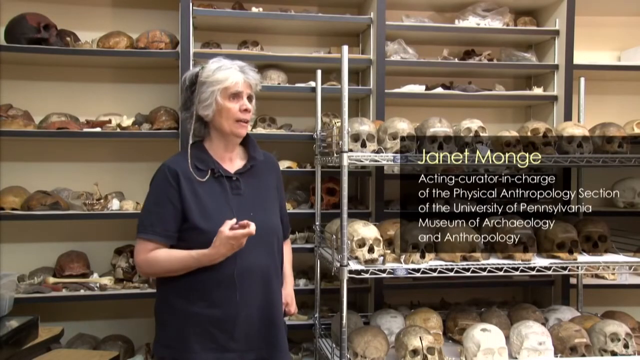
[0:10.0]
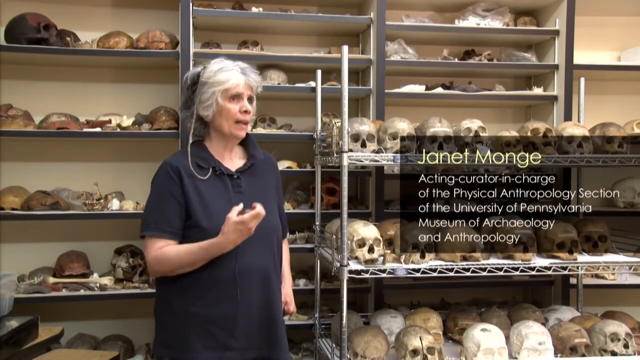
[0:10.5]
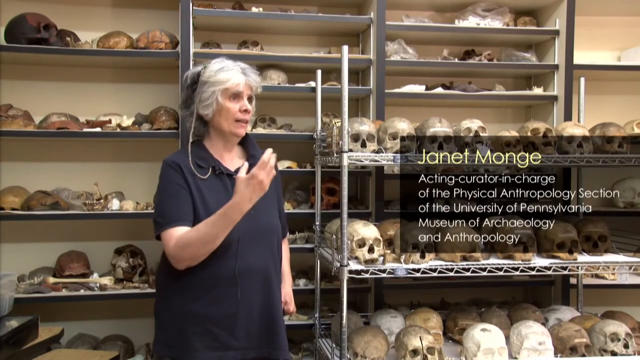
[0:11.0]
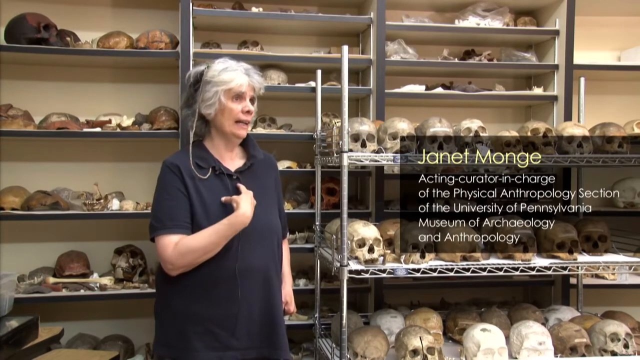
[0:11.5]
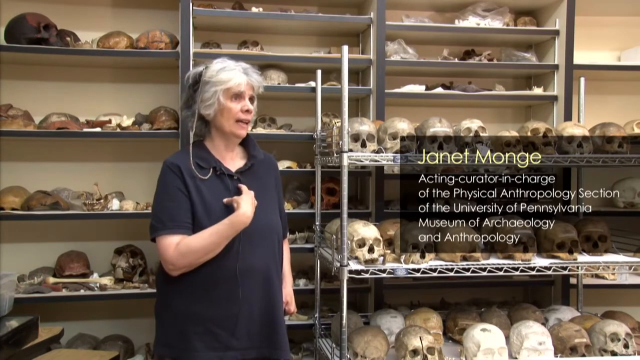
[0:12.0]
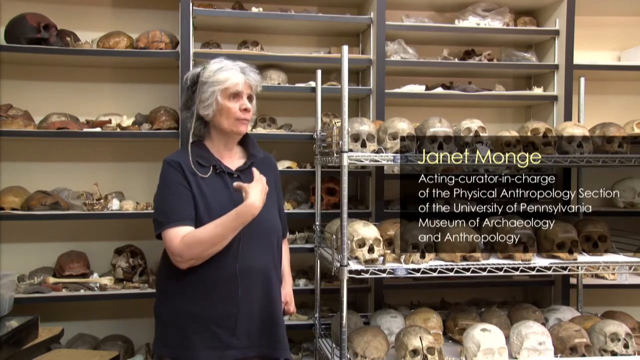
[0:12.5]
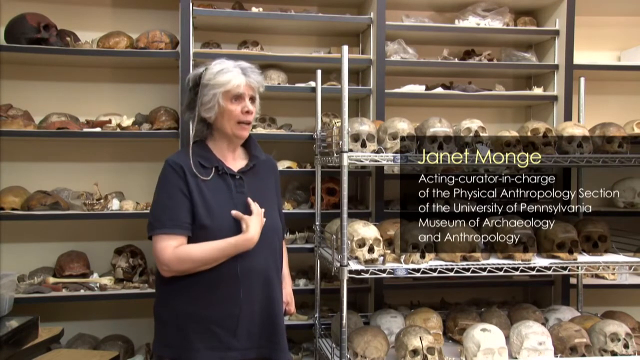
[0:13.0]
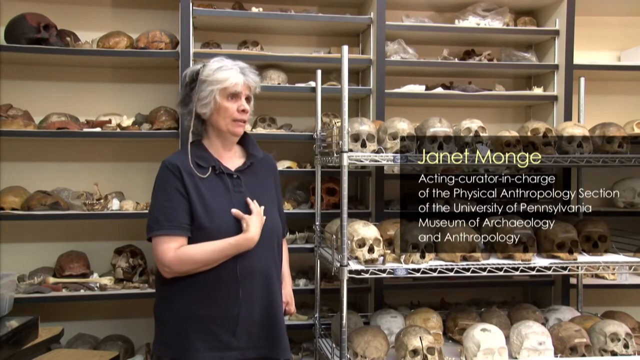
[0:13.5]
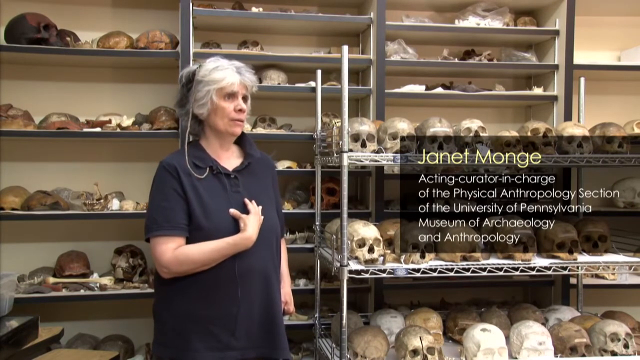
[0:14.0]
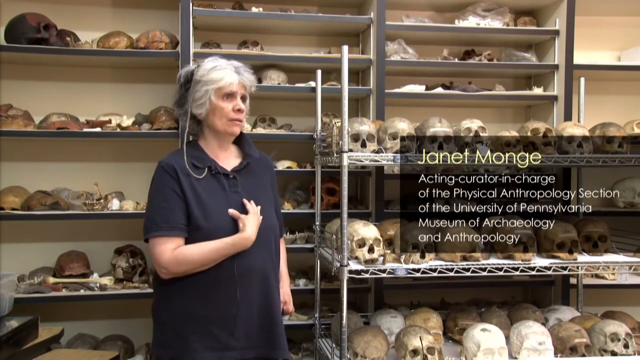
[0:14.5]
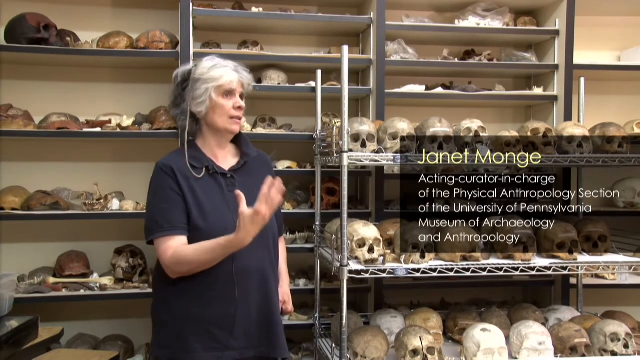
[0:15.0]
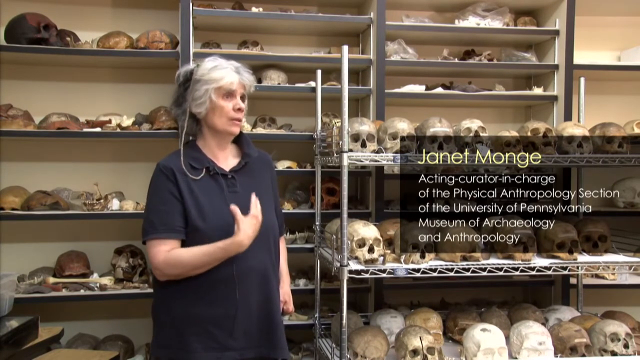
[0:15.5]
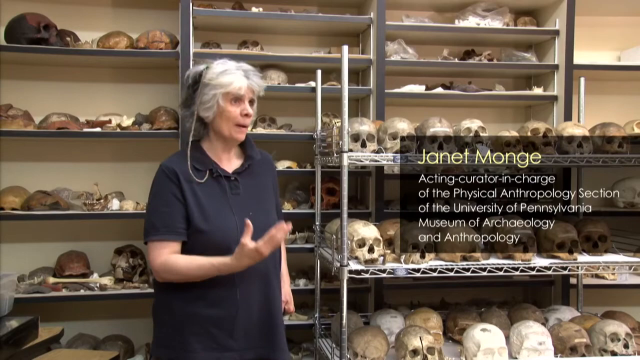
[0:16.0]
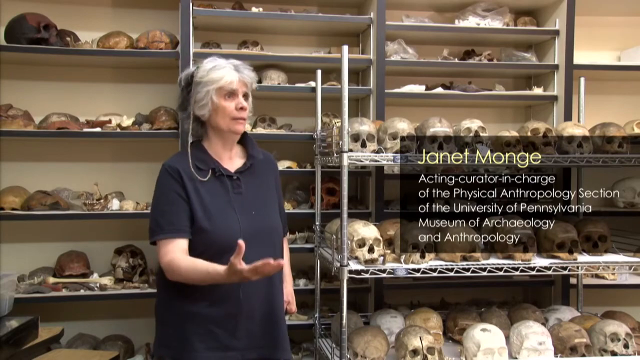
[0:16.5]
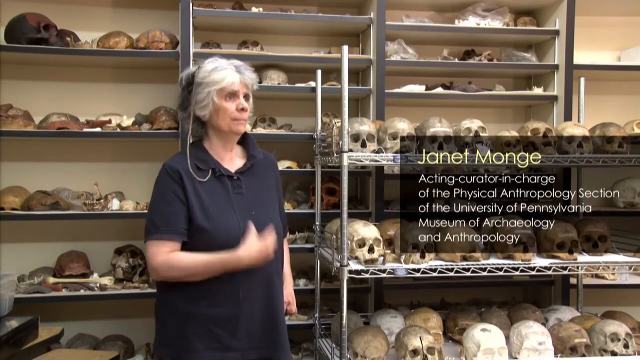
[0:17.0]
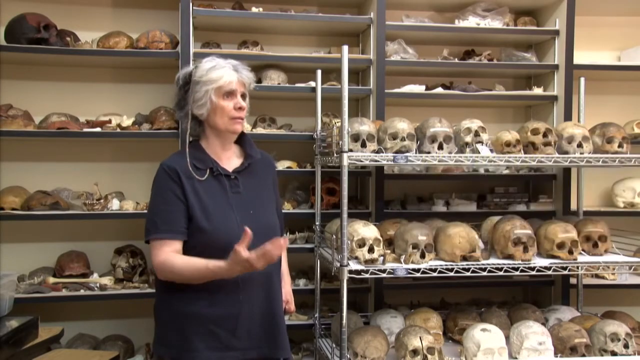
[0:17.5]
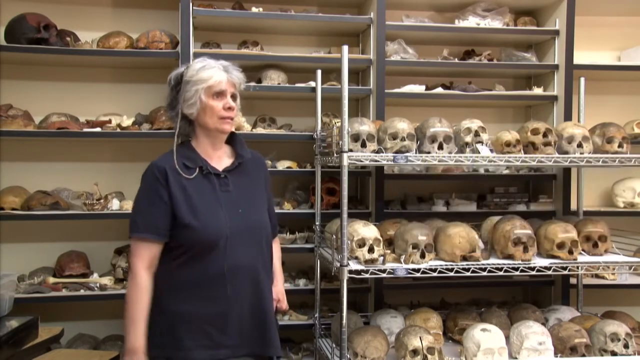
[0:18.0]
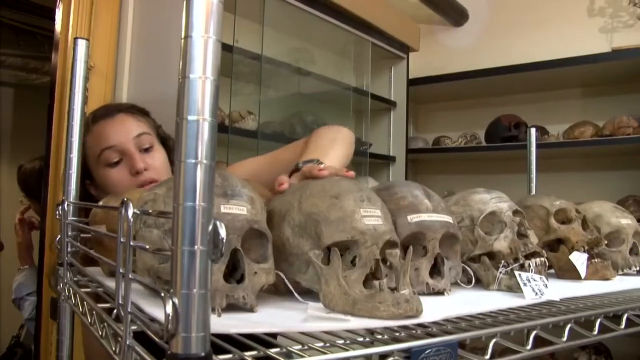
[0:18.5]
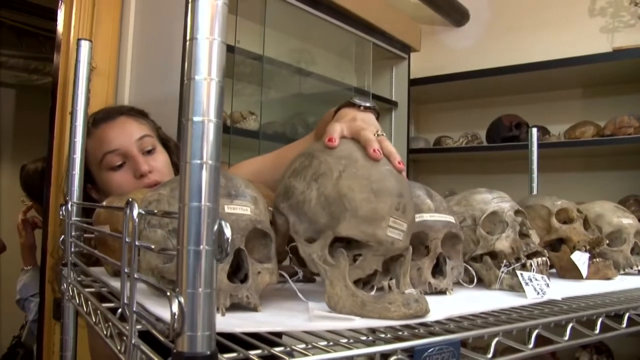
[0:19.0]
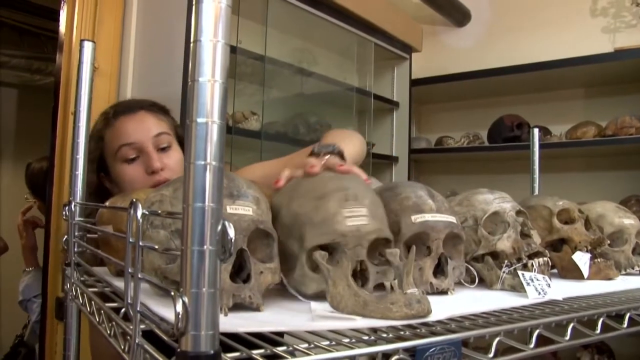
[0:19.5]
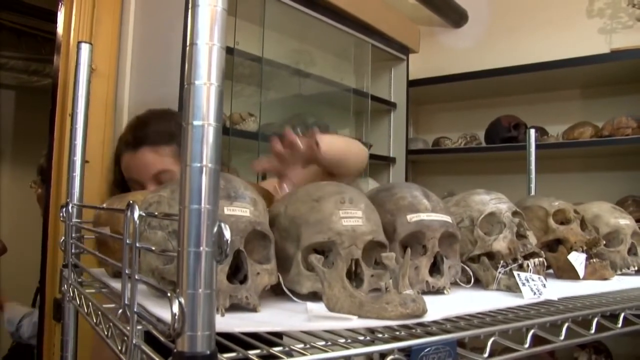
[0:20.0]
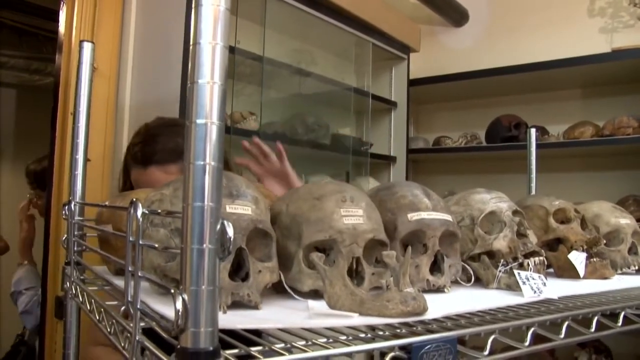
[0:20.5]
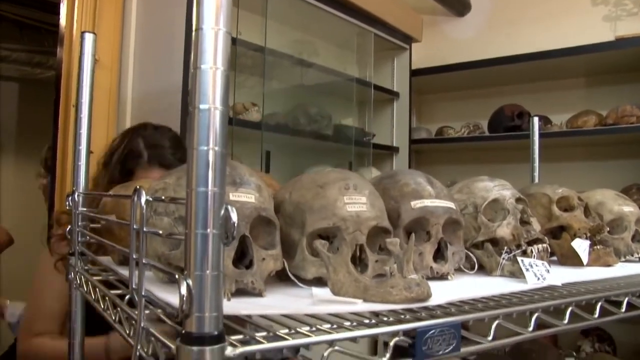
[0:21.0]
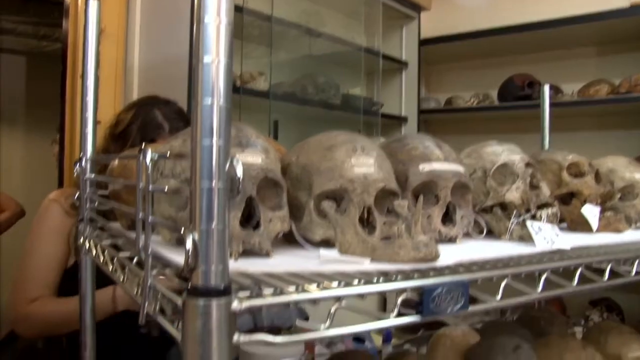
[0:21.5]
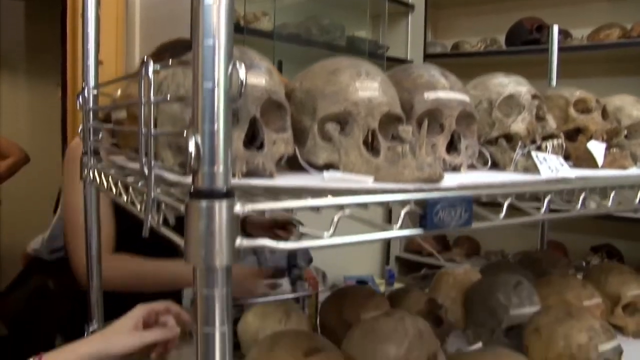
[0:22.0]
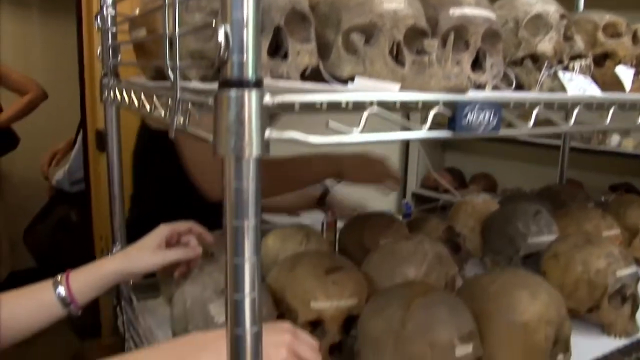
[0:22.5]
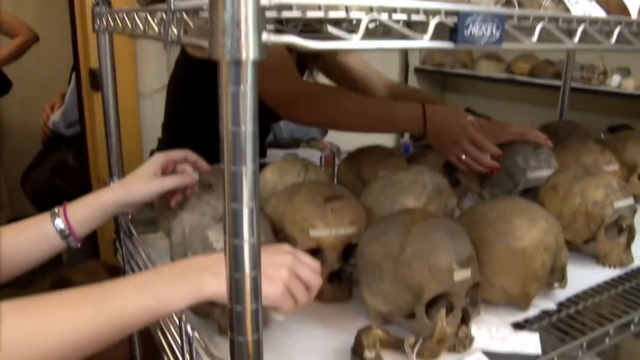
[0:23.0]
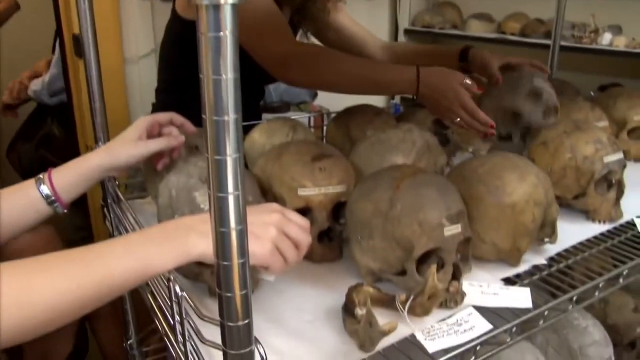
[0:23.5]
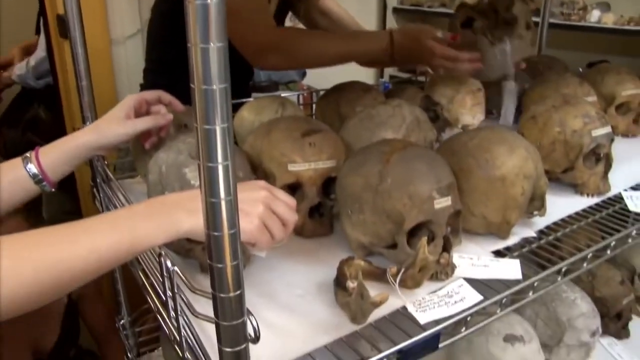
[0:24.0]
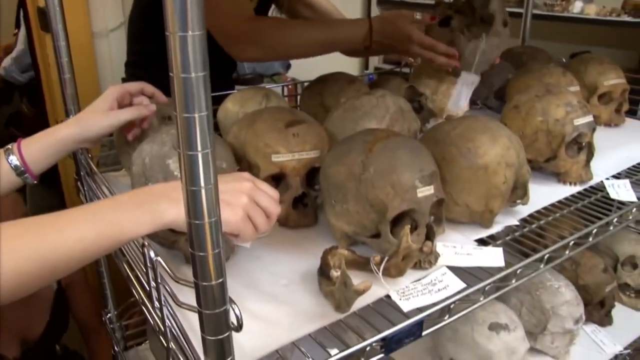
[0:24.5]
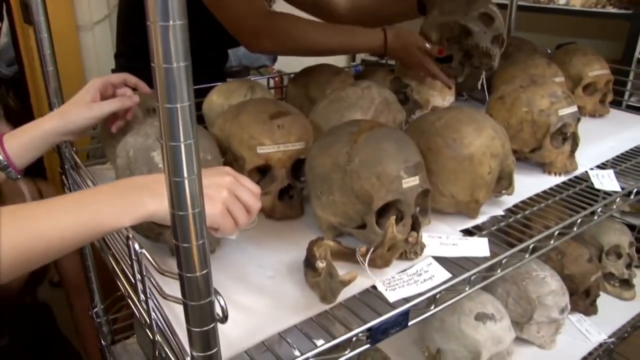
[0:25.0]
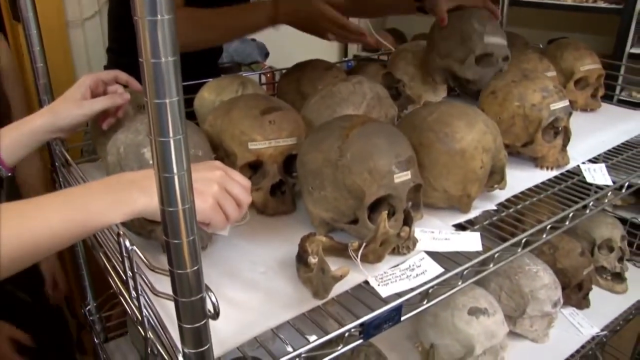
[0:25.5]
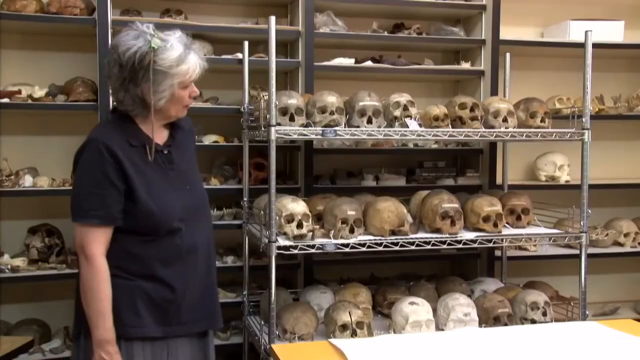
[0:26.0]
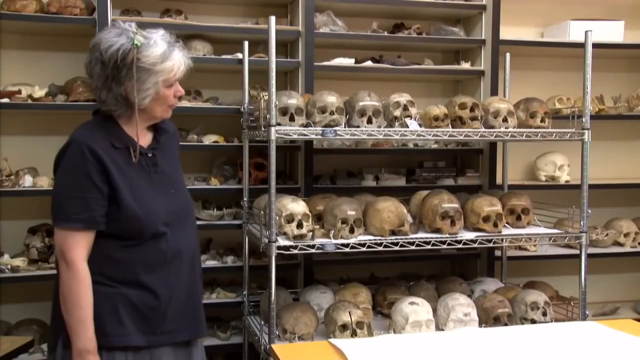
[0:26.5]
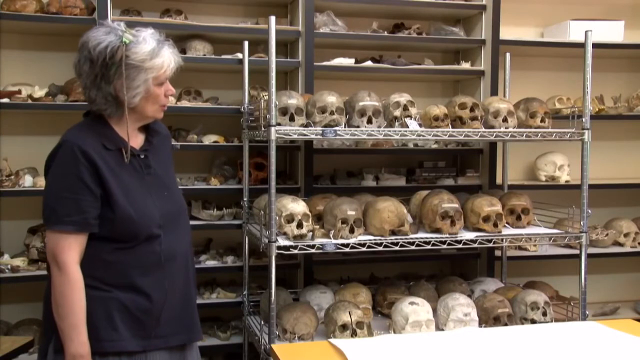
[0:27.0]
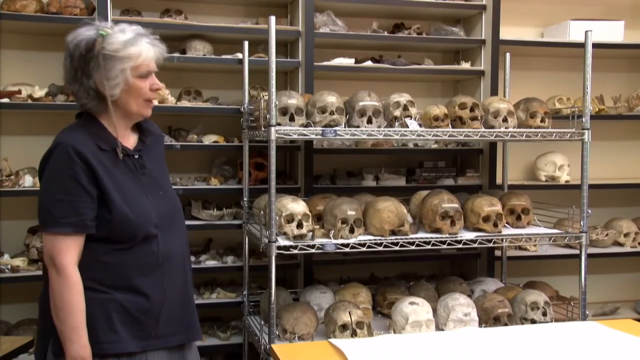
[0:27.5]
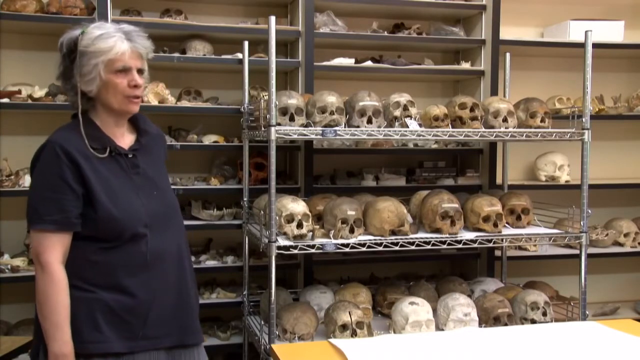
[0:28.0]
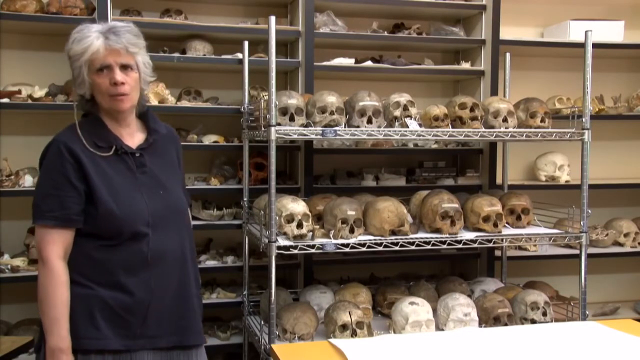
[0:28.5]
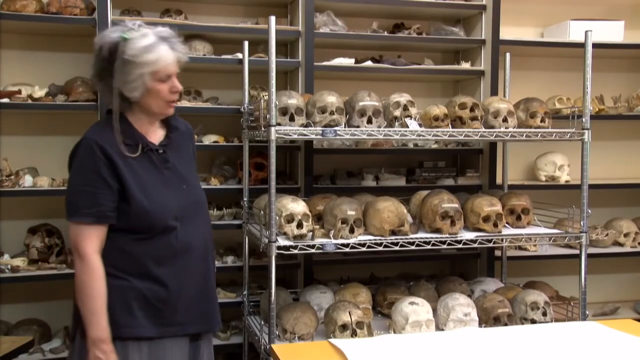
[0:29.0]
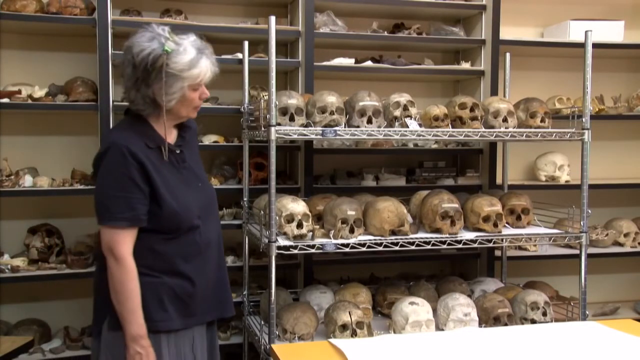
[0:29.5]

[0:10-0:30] A woman stands in a room with shelves full of human skulls behind her and metallic shelves full of human skulls to her right. She faces slightly to the right, has white hair, and wears a black polo shirt. Her left hand is at her side, and her right arm is bent at her right side with her palm facing up and her hand or fingers curled together. On the right side of the frame is a dark gray, partially transparent text box; at the top, yellow text says "Janet Monge," and beneath it, white text says "acting curator in charge of the physical anthropology section of the University of Pennsylvania Museum of Archaeology and Anthropology." Janet Monge raises her hand and places it in front of the middle of her chest, fingers pointed toward her chest, and taps her chest twice as she continues to speak. She then waves her hand back and forth in front of her with her fingers and thumb outstretched. The video changes to a new shot of a woman standing behind one of the metallic shelves, holding on to a skull on it. She wears a watch on her left hand, the hand she uses to touch the skull. With a surprised look on her face, she picks the skull up for a second, then looks down as she lets it go. In the background, in another room, a person raises their left hand to their glasses to tap them as they speak to someone to their left. The woman moves to touch another skull on another shelf to her right, and she is seen wearing a black dress as the camera pans down, revealing another pair of hands belonging to another young woman holding on to skulls. The first woman in the black dress grabs a skull, picks it up with both hands, and looks at the bottom of the skull while moving it around. The video then switches to a shot of Janet facing to the right. Janet speaks, looks back to the camera, and then faces the right side of the frame again.